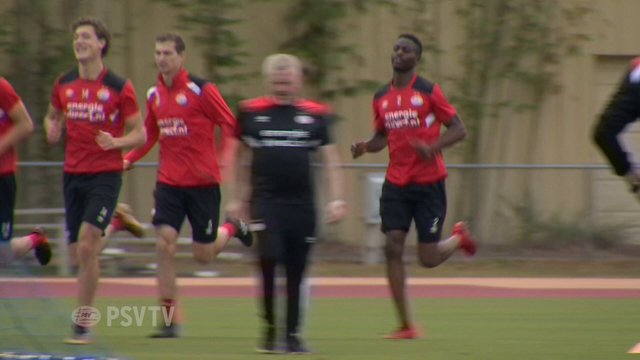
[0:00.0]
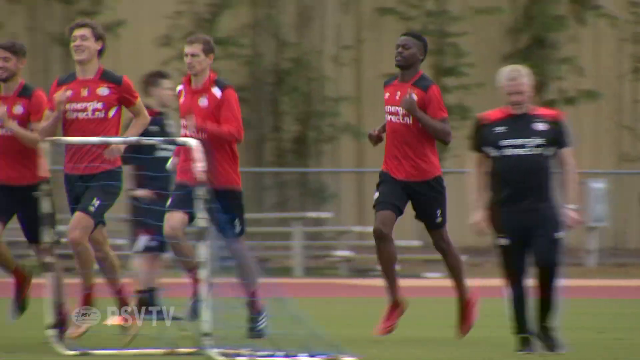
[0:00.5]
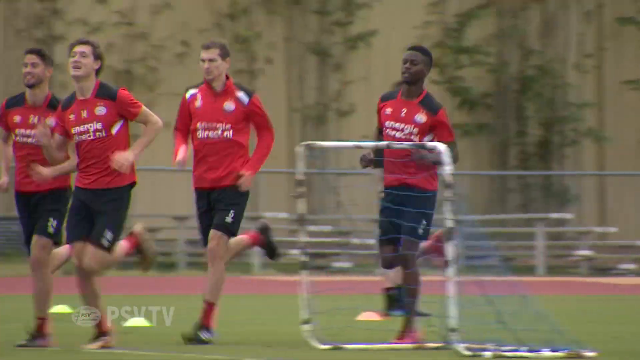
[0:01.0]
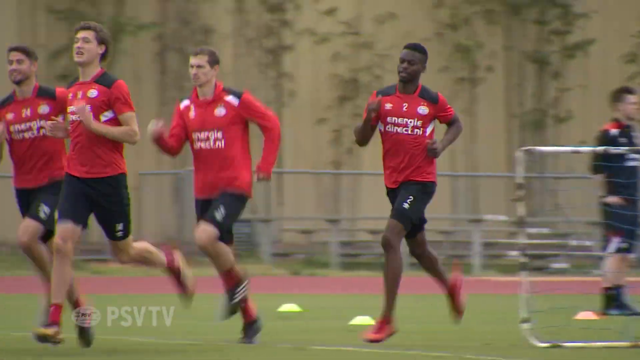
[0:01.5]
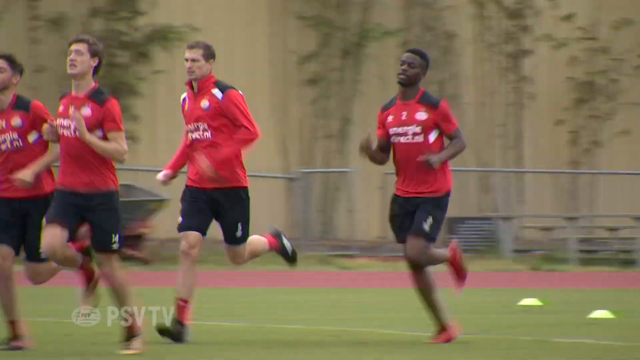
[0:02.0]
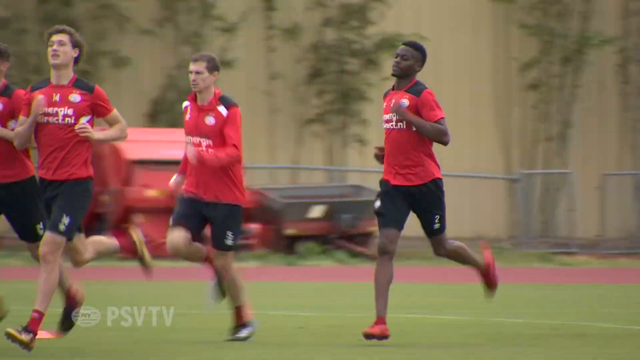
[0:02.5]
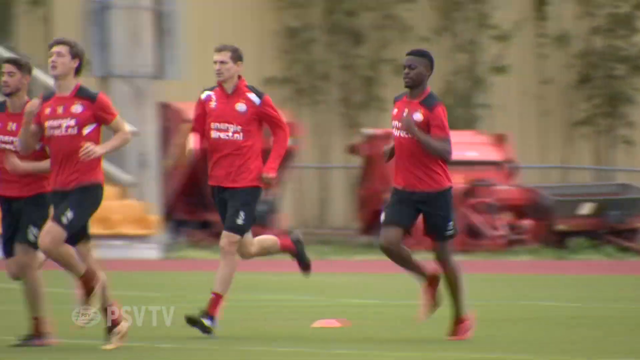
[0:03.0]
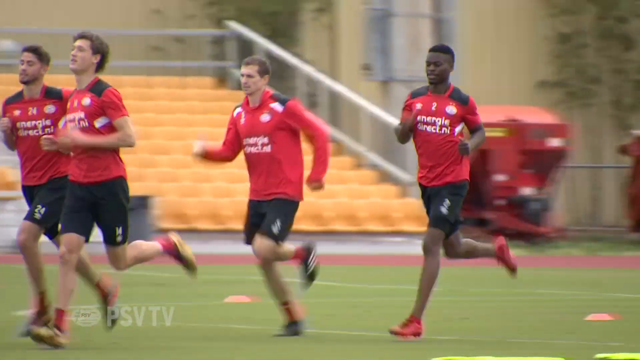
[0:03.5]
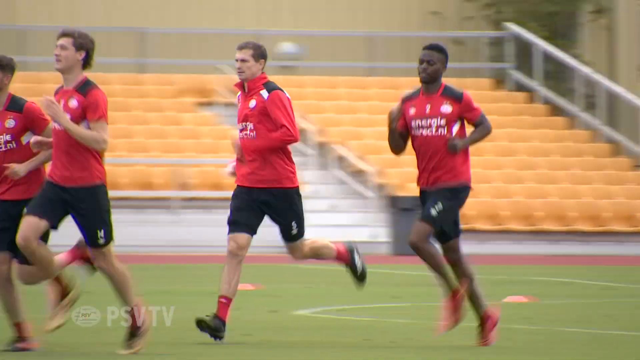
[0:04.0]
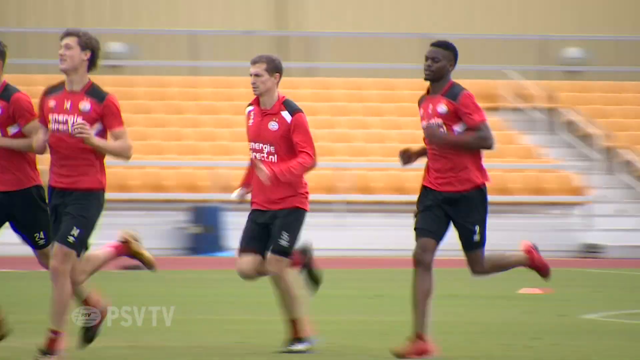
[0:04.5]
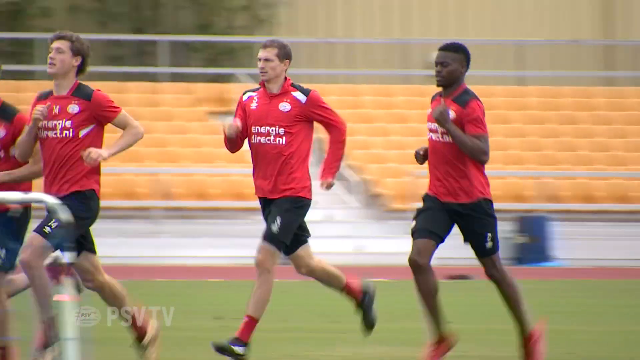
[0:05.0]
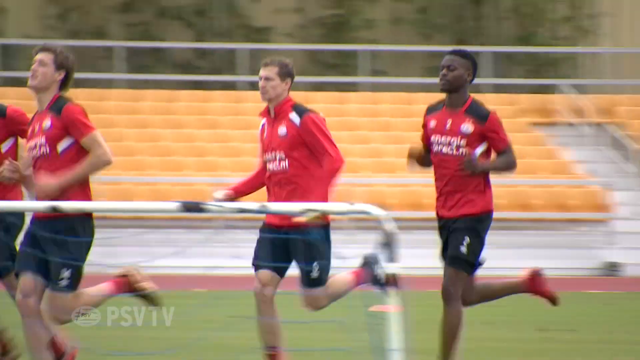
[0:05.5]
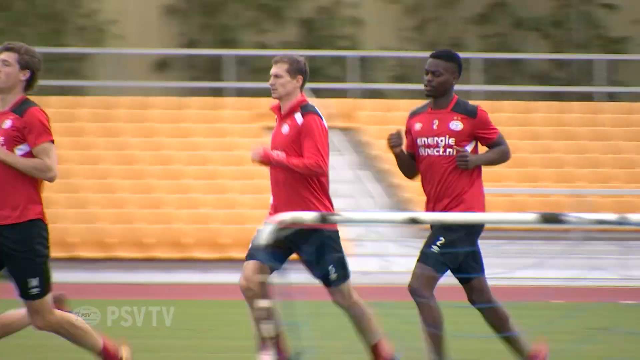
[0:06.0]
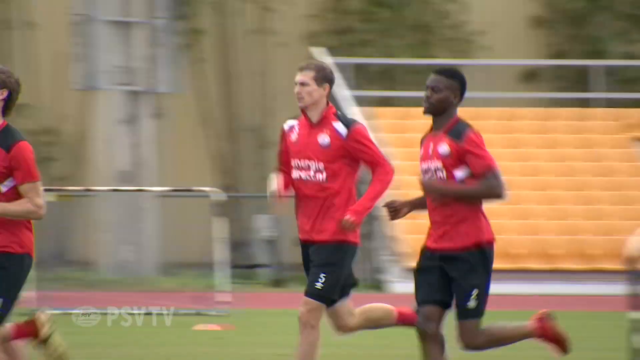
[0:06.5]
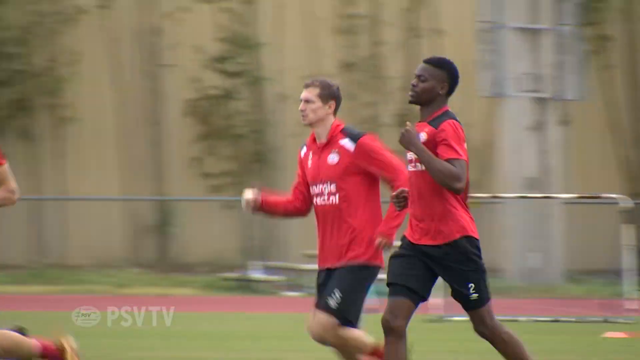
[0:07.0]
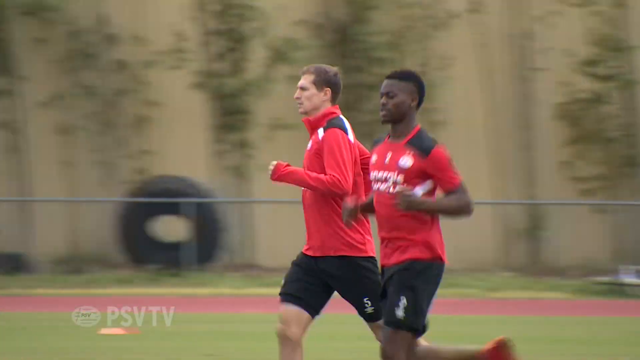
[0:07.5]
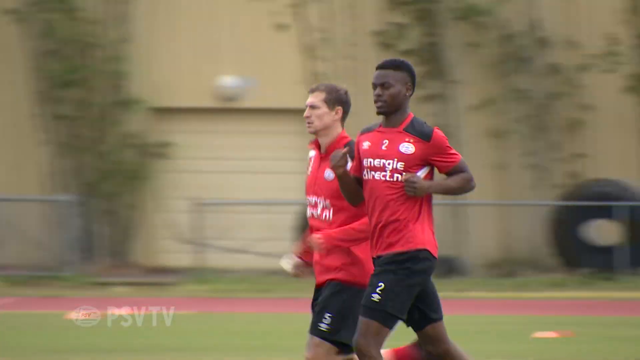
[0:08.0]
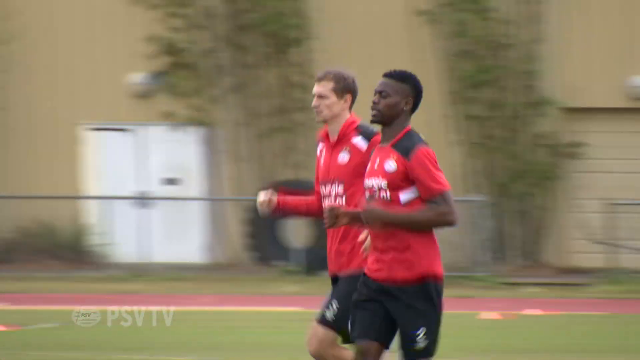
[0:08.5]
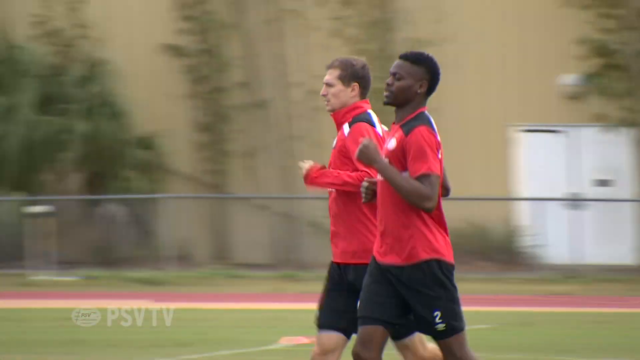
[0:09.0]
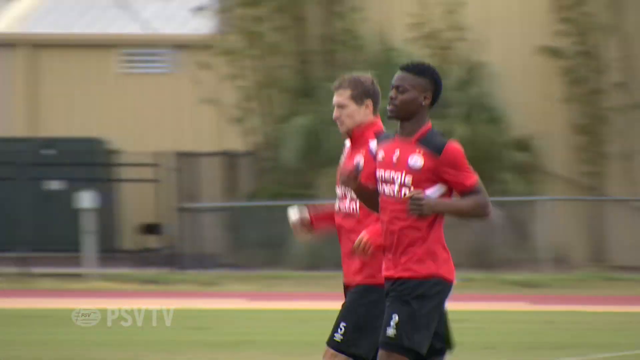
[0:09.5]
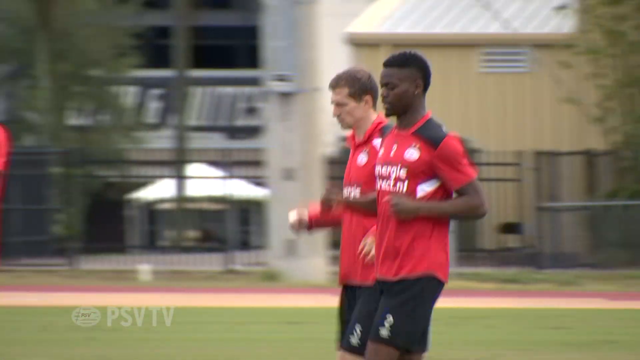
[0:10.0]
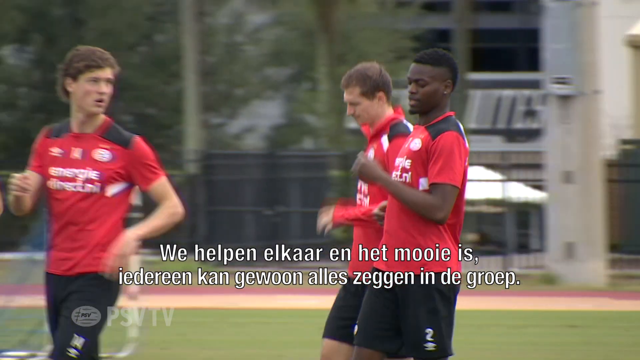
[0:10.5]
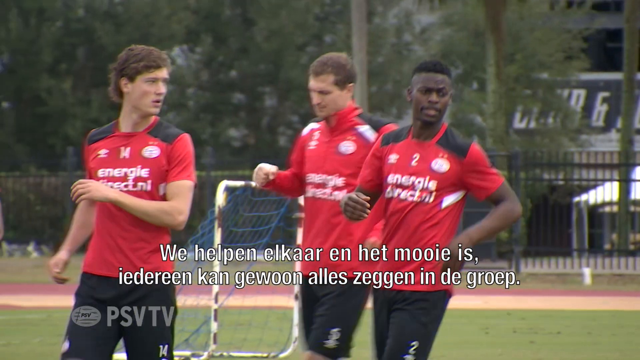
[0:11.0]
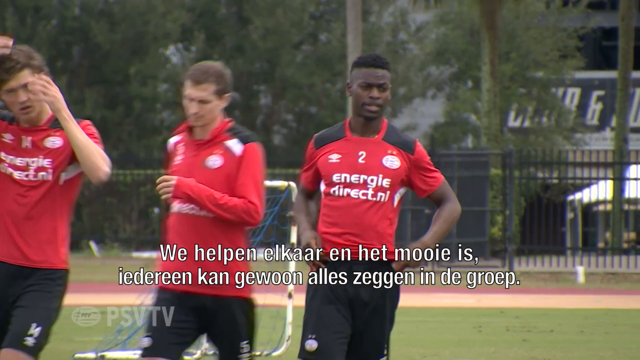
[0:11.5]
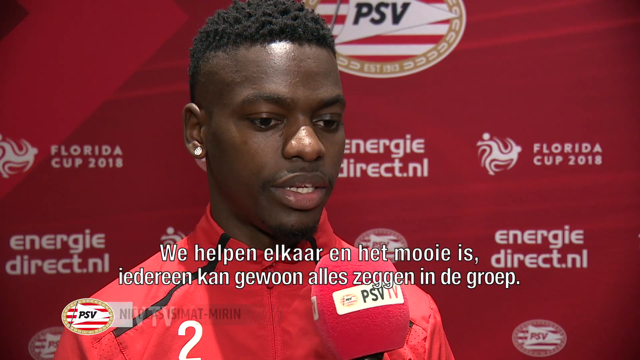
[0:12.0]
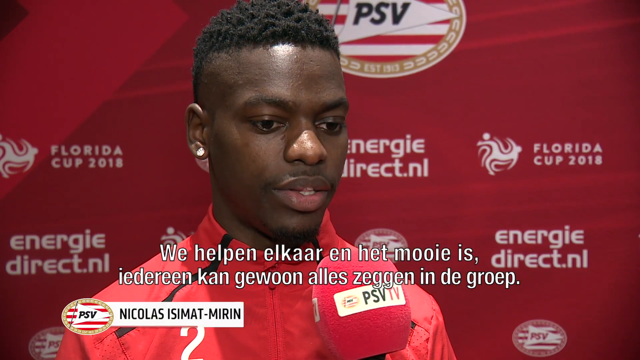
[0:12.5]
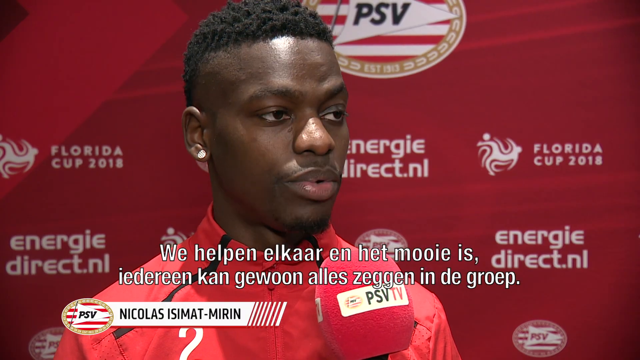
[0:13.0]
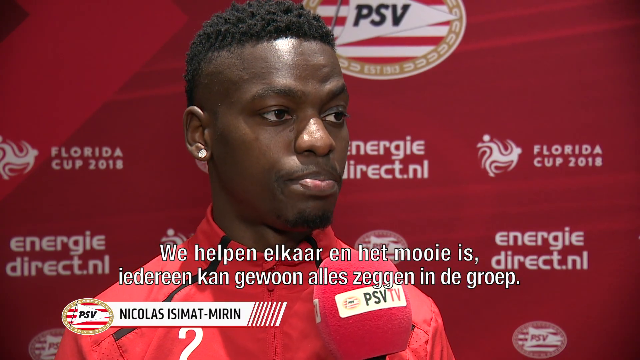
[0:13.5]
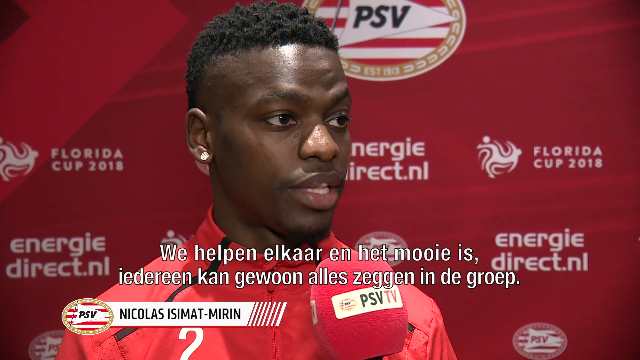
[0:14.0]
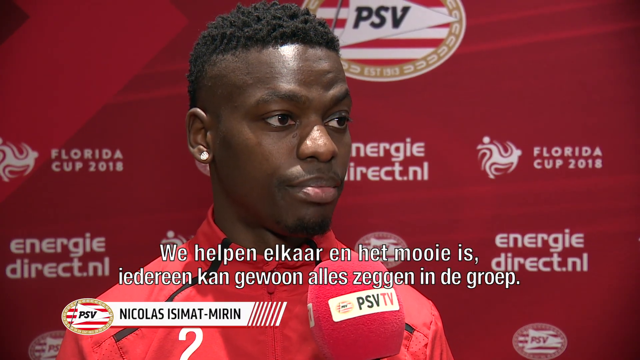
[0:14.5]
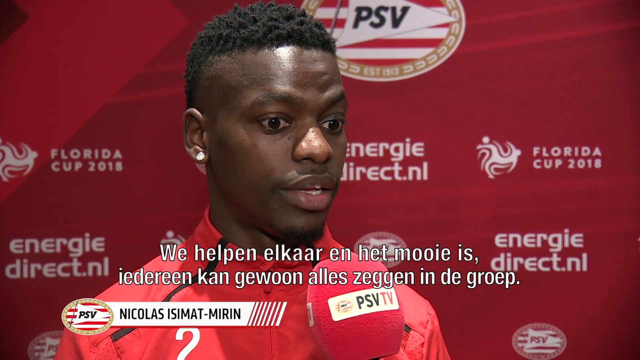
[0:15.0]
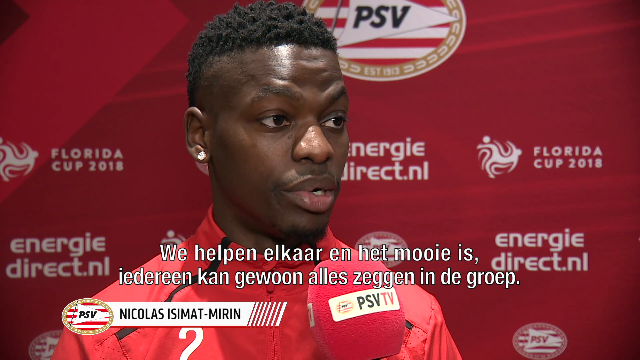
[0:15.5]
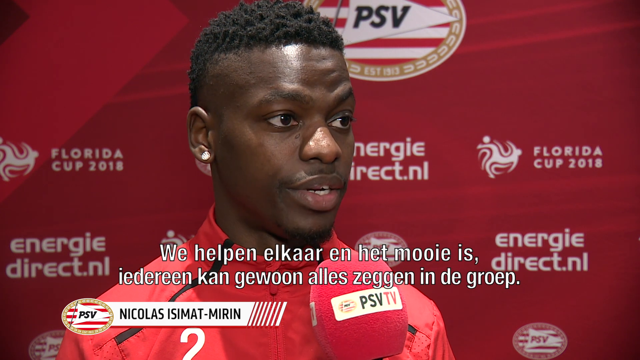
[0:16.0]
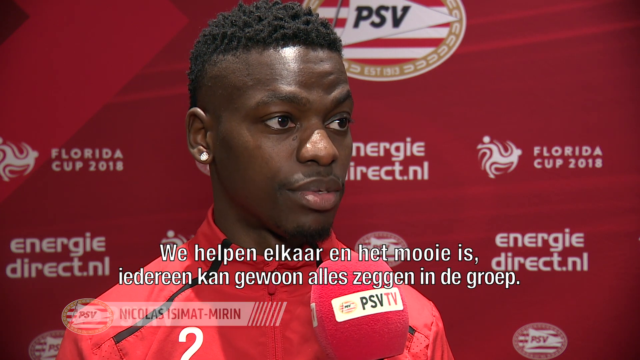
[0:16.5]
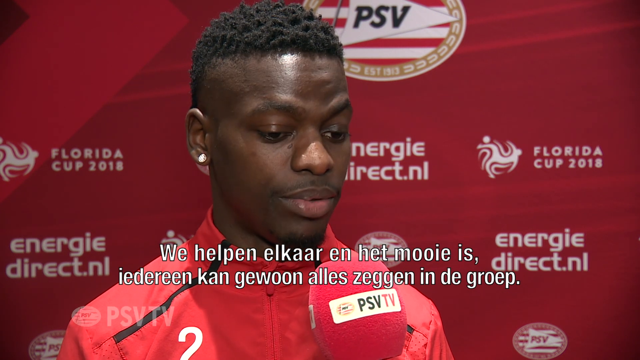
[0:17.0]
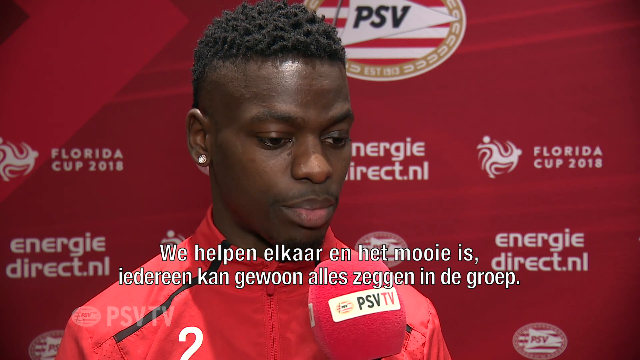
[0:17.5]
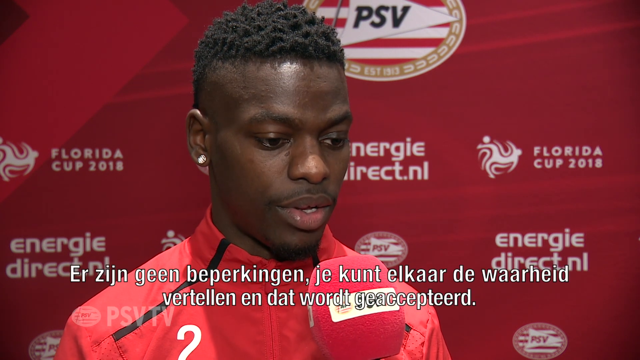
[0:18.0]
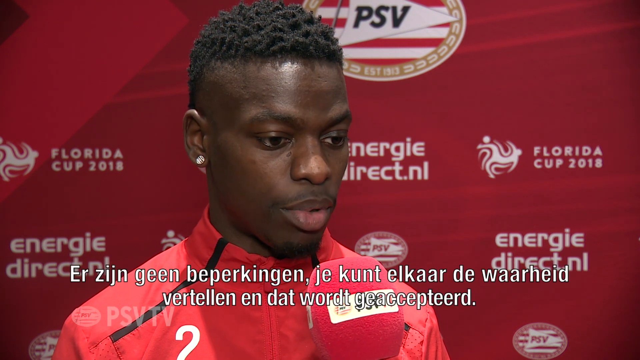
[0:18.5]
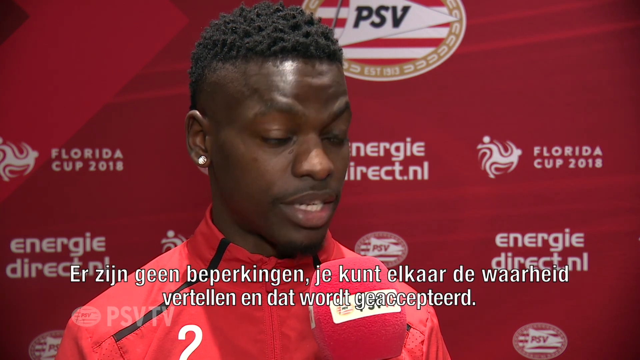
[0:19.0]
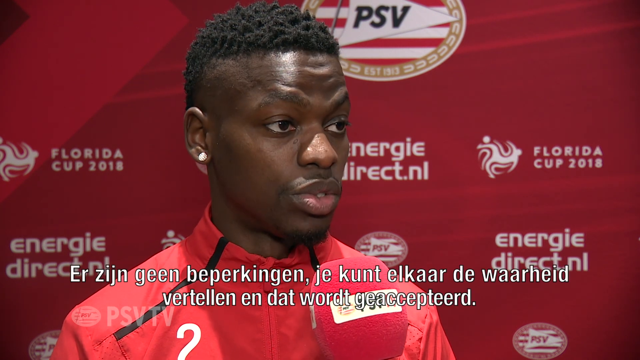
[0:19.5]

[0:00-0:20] At least five runners, maybe six, run in the background; four are visible for a while, and part of a fifth appears every so often. They do not seem to be in an actual race. One of the men is interviewed in front of a red sign, with a caption in text at the bottom of the screen. The men all wear red jerseys and red and black shorts, and many of them have red shoes. There is a fence in the background with vines hanging on it, and as the men run, bleachers with orange seats come into view. The man's name appears on screen as "Nicholas", while the rest of the captions at the bottom are in a non-English language. A couple of other runners are walking around the area.